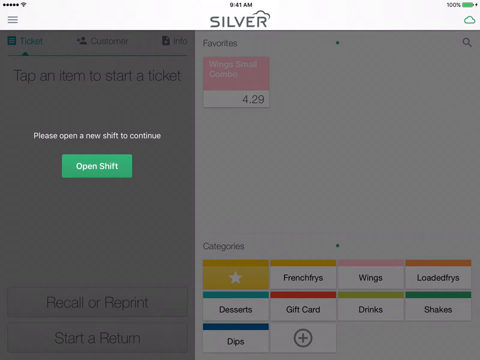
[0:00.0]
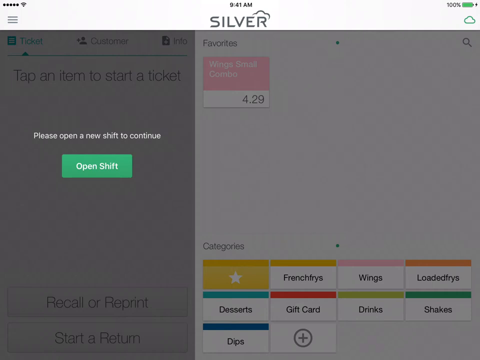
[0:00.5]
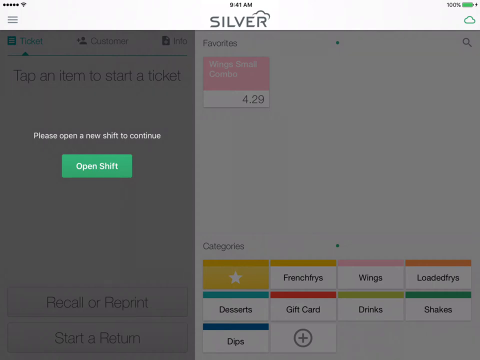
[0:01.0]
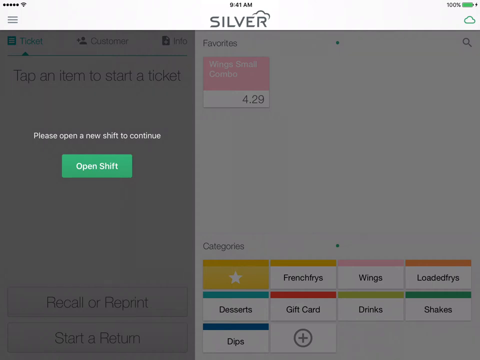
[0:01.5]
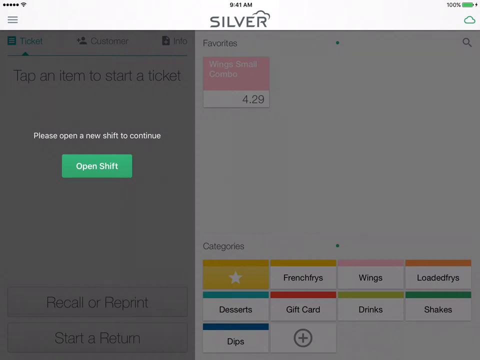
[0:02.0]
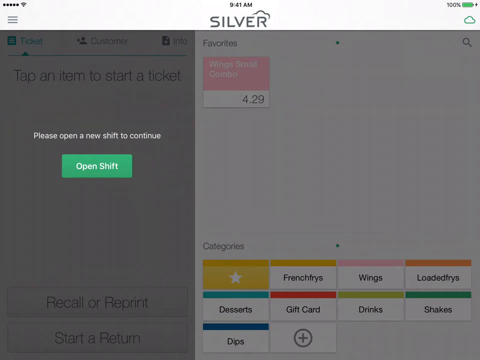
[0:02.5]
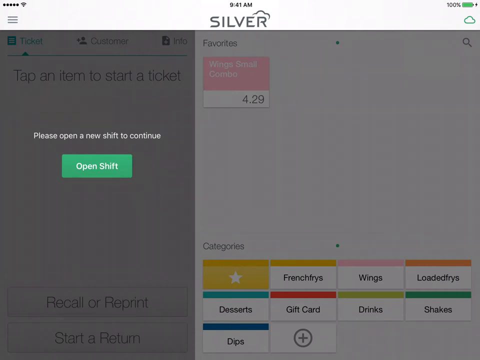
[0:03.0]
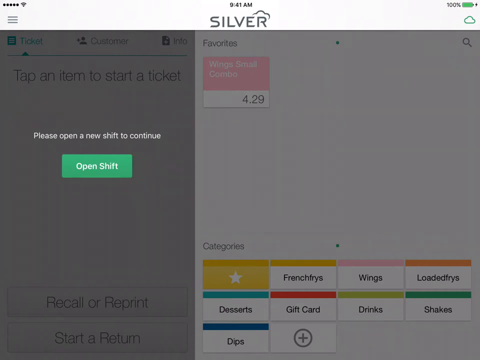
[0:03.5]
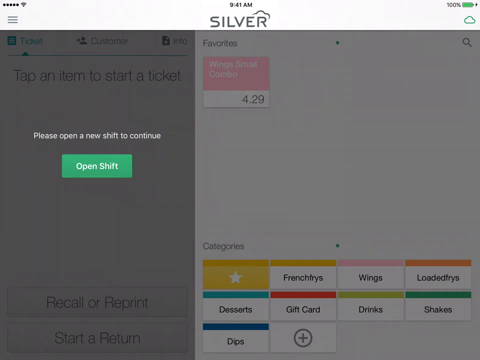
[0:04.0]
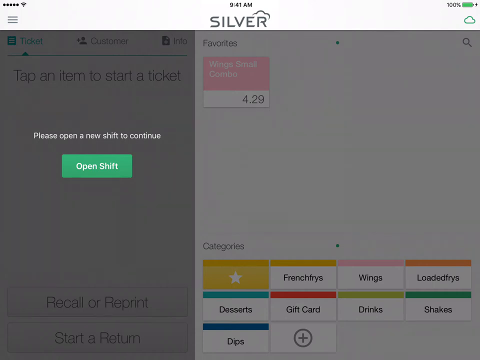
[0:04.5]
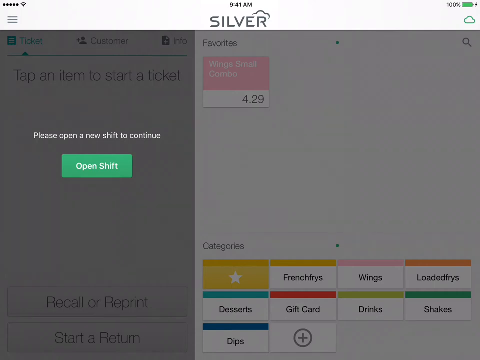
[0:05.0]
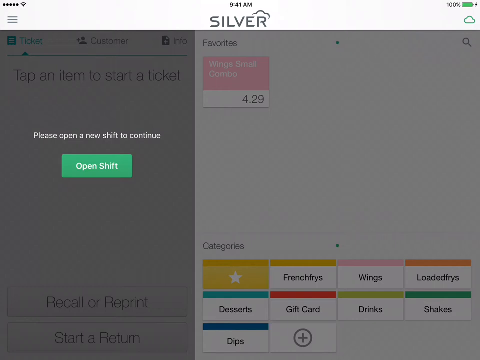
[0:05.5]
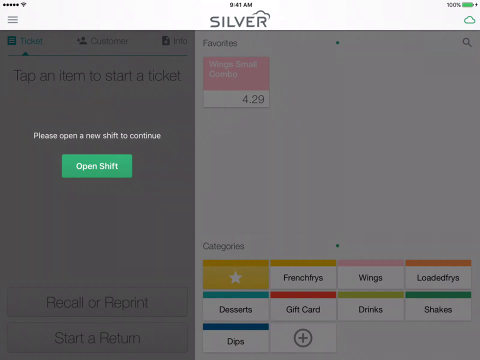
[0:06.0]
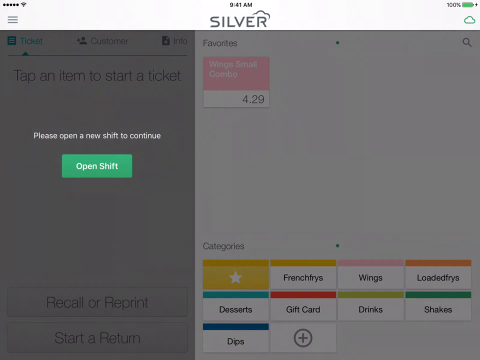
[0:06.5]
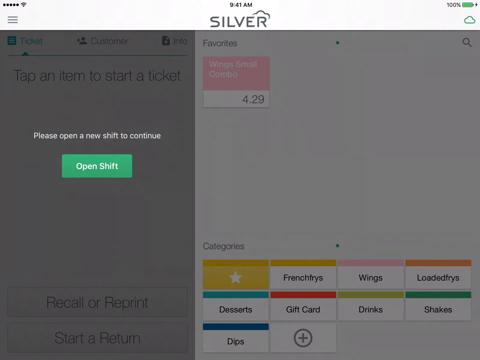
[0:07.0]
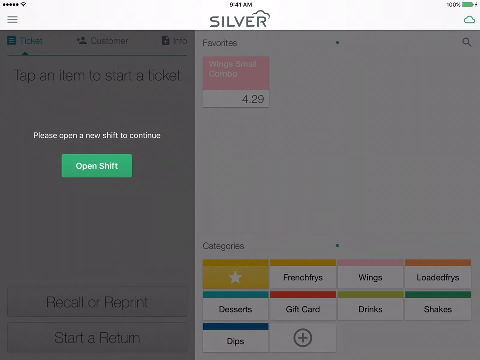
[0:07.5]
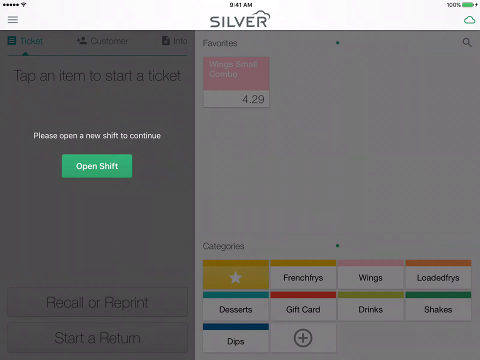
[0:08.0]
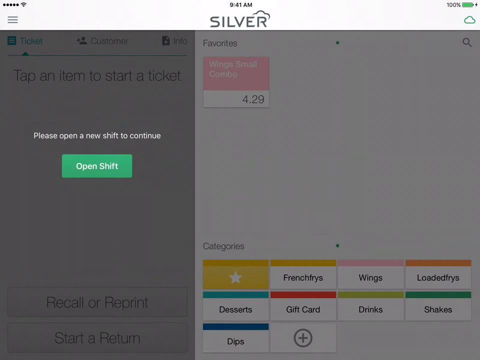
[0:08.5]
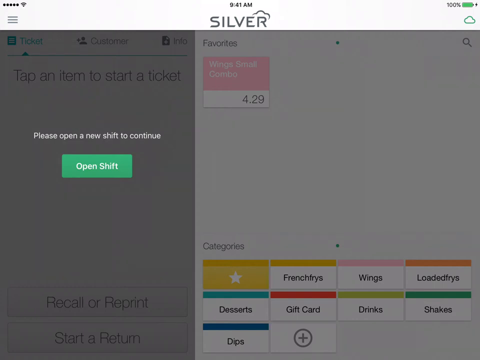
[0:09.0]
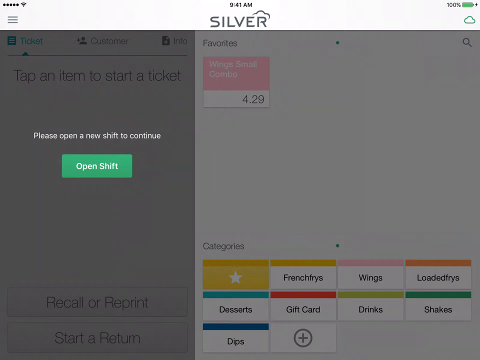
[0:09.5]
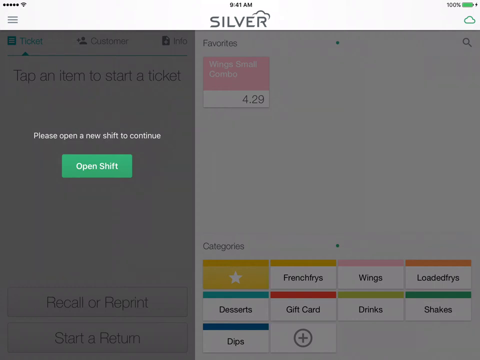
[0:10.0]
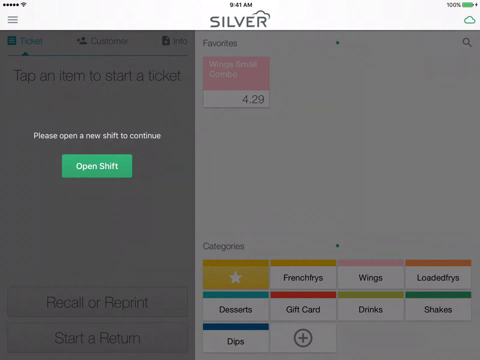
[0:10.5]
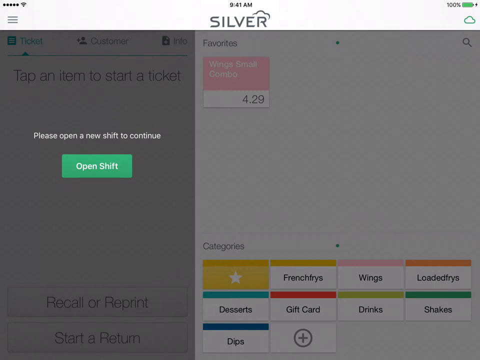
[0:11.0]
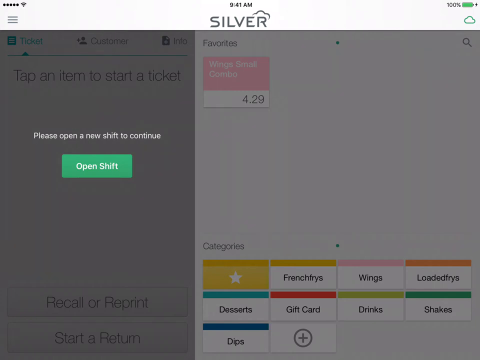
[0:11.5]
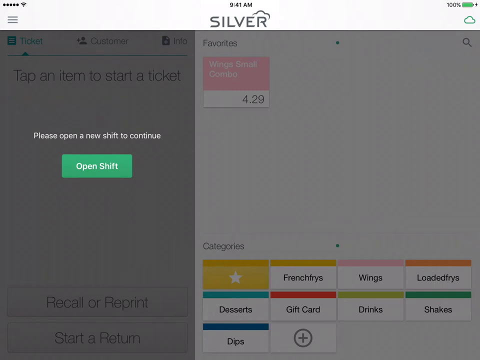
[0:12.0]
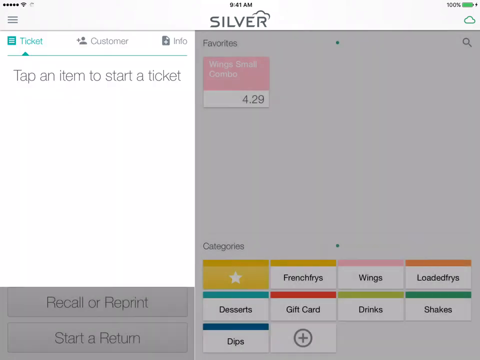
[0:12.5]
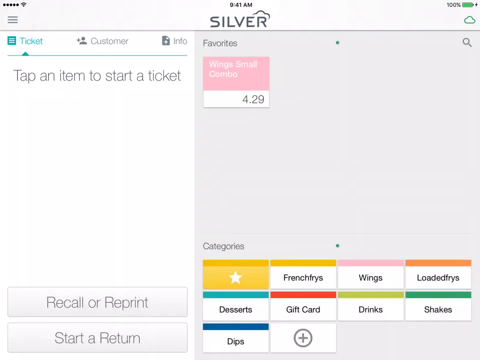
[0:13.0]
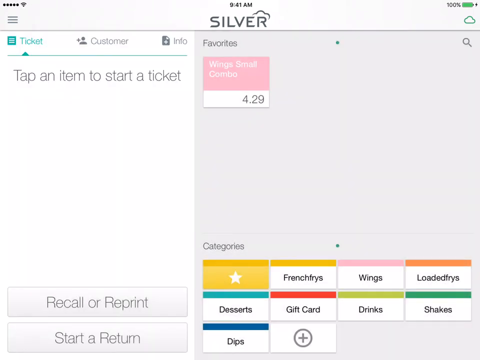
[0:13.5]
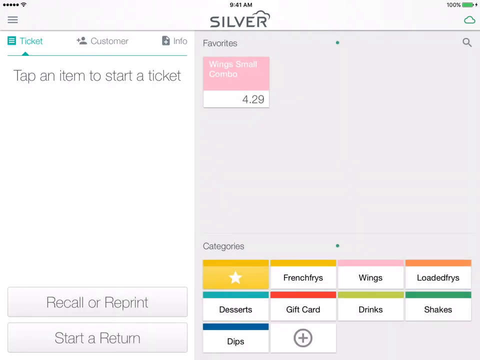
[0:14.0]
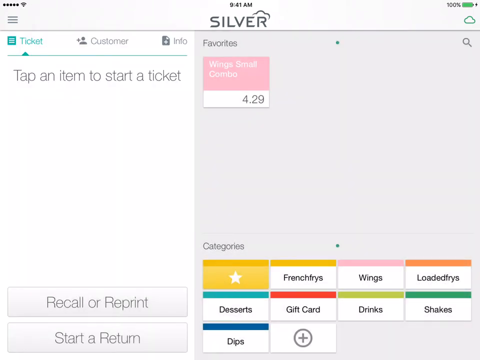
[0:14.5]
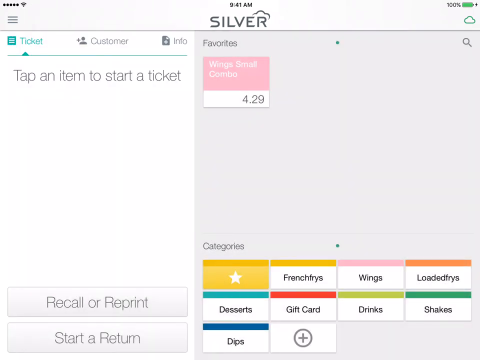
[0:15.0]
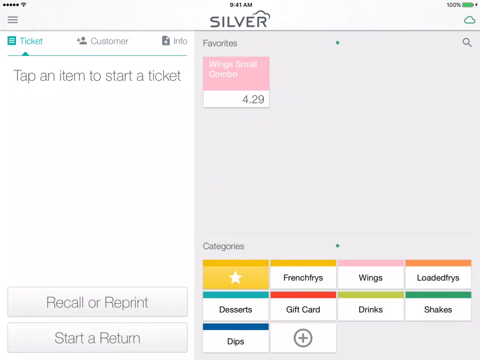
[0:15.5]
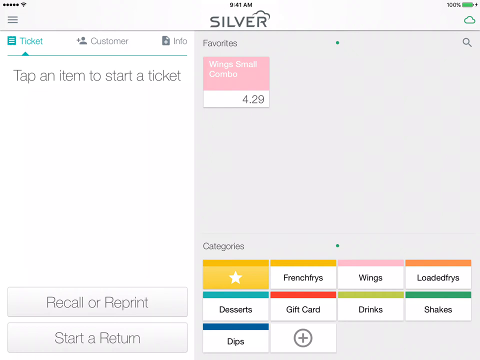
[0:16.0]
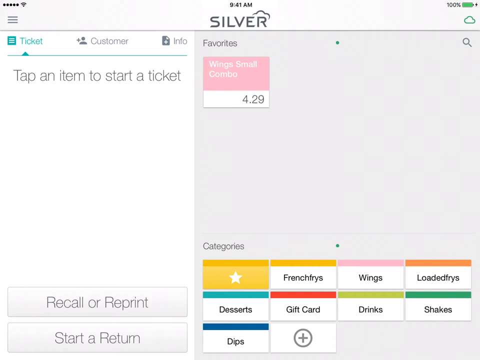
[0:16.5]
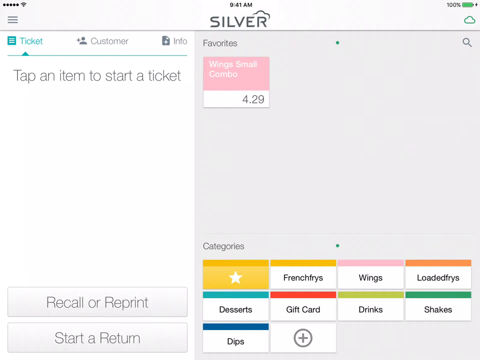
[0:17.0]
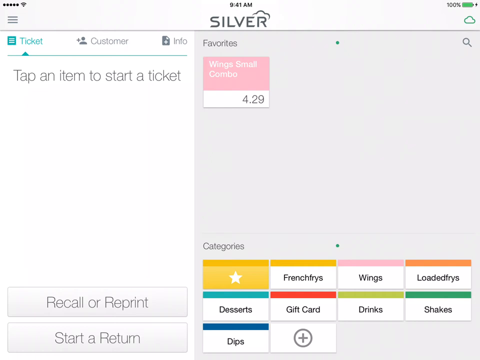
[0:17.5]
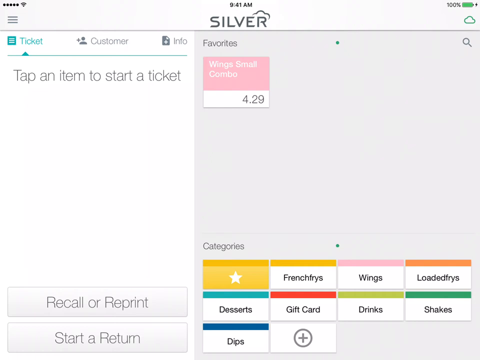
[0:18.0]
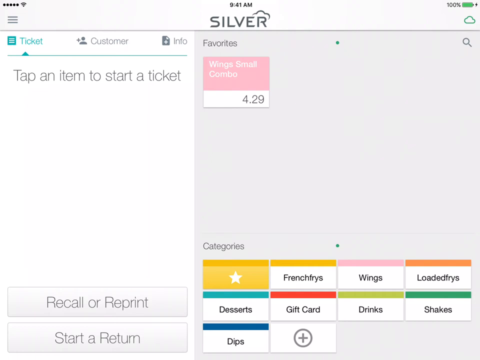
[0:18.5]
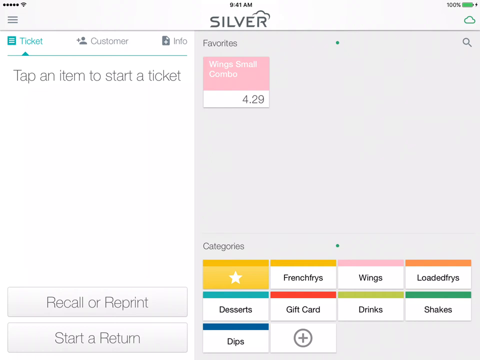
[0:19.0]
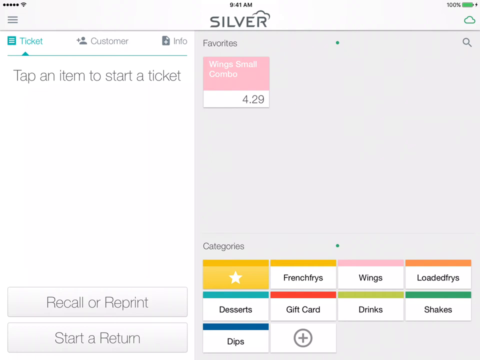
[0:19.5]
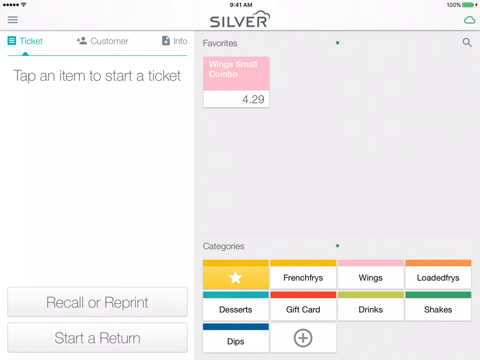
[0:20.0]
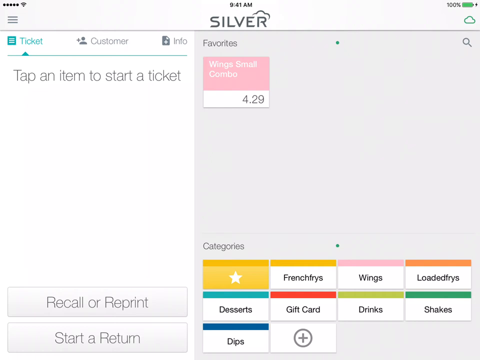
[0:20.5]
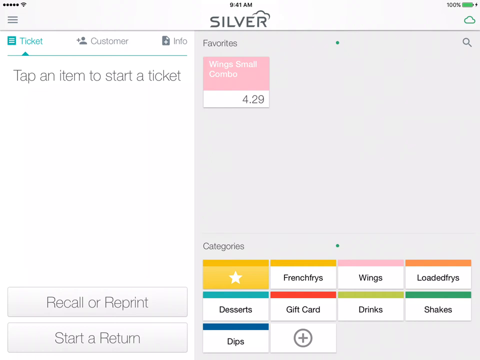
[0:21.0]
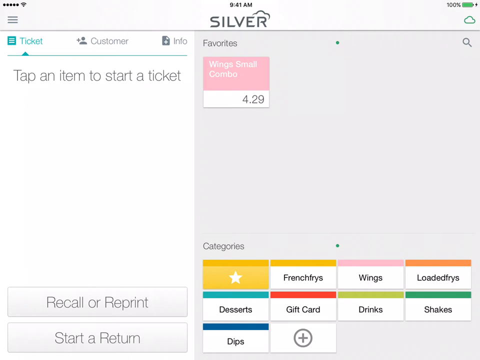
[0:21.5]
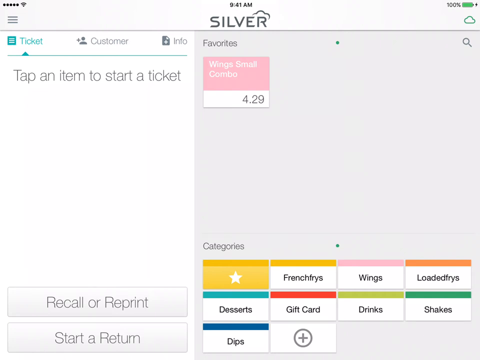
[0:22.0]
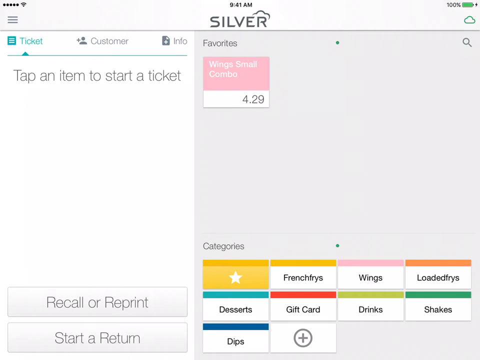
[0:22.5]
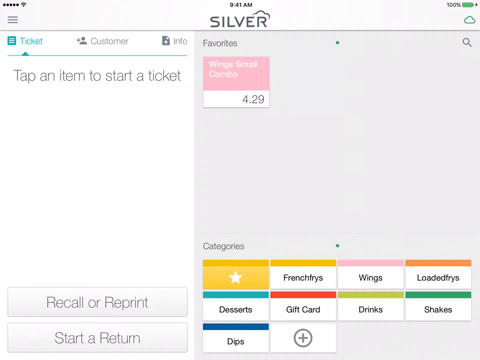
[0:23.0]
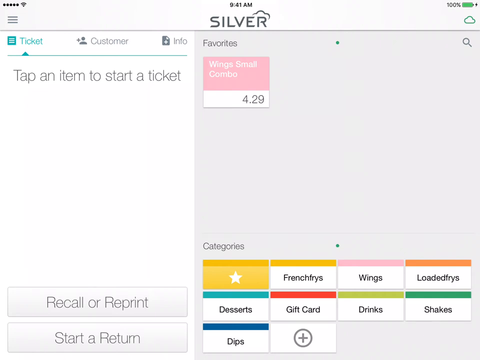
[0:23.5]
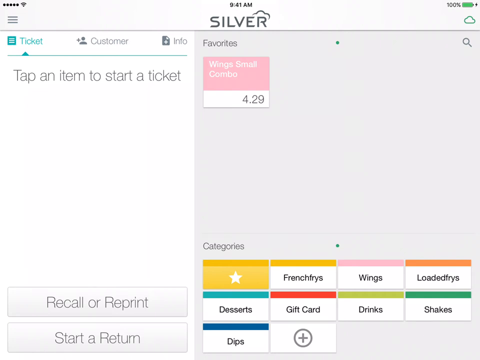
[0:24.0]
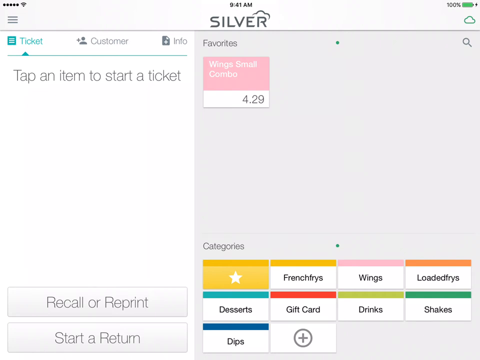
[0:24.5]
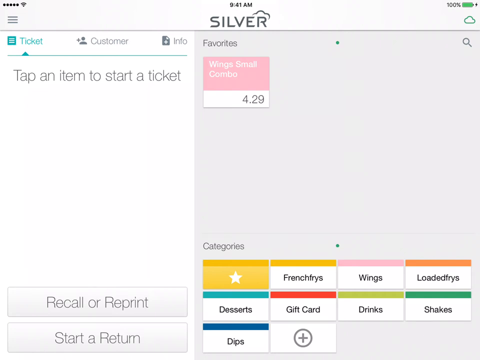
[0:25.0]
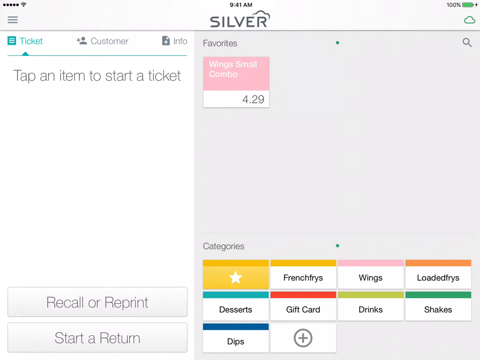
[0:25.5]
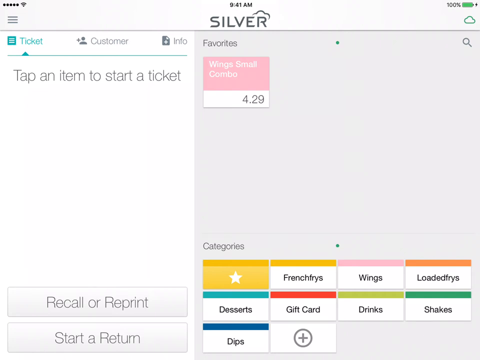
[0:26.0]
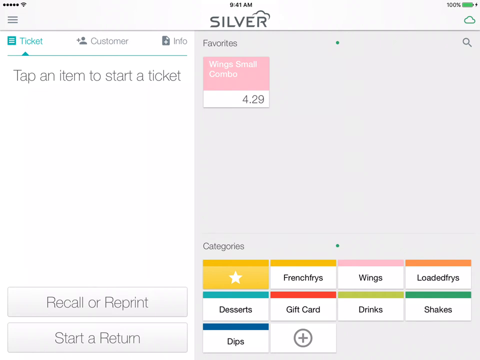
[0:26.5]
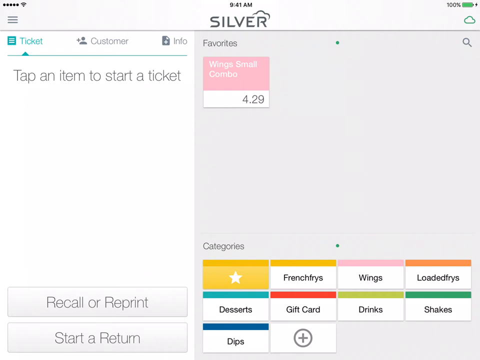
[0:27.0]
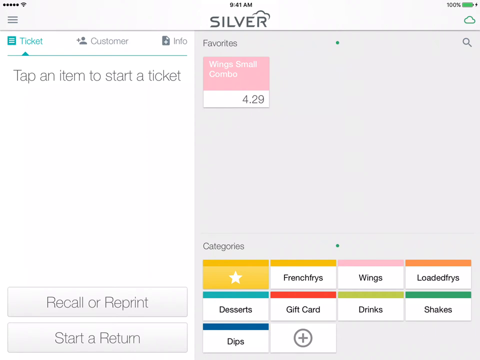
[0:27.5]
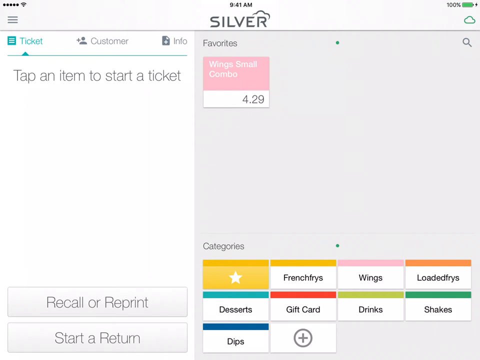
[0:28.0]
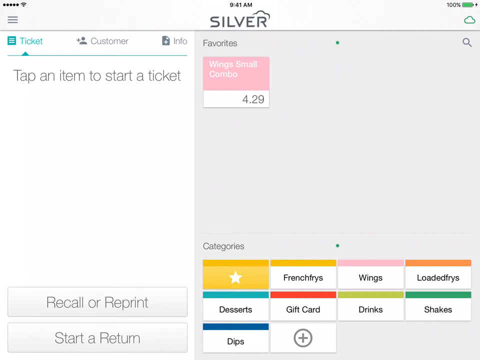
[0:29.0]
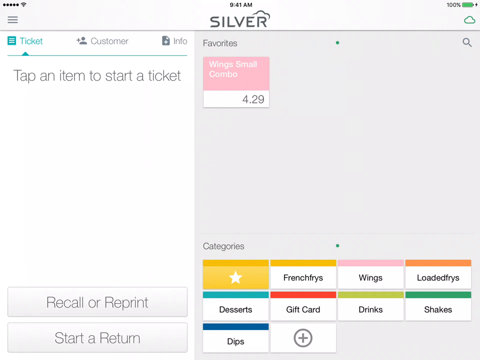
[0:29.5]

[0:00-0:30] The video seems to show a screen capture of an interface for some sort of restaurant ordering system, apparently with items that can be ordered. At first most of the screen is grayed out, with lots of content visible behind it. On the left is a green button reading "Open Shift" in white text, and above it white text reads "Please Open a New Shift to Continue" on a blacked-out gray field. At the top is a white horizontal bar with the logo "silver", apparently the name of the software, with a little cloud over the letter R. A three-horizontal-bar menu button is on the left of the bar and a little cloud on the right. At the top there is also a 100% battery indicator on the right, a signal strength indicator on the left, and the time, 9:41 AM, just above the "silver" logo. The screen stays in this state for several seconds without Open Shift being clicked. Finally someone clicks it, and the rest of the screen brightens to white and light gray. On the left are tabs for Ticket, Customer and Info, and on the right is a field where items can apparently be clicked. At the bottom are buttons for French fries, wings, loaded fries and desserts. It looks like the wings small combo, costing $4.29, has been picked.